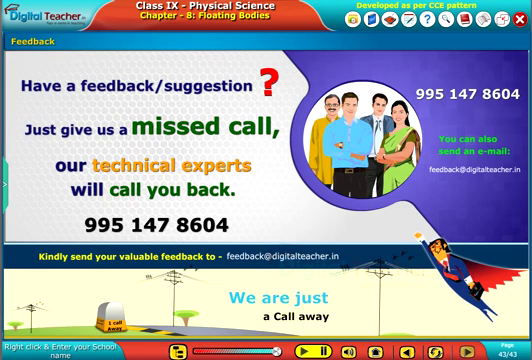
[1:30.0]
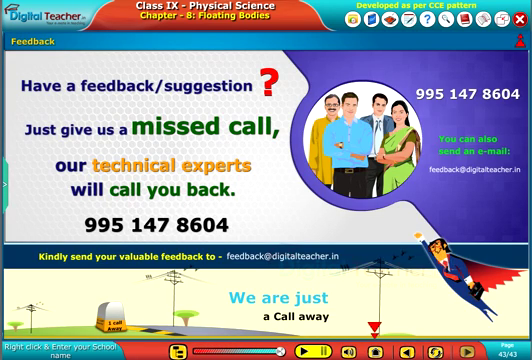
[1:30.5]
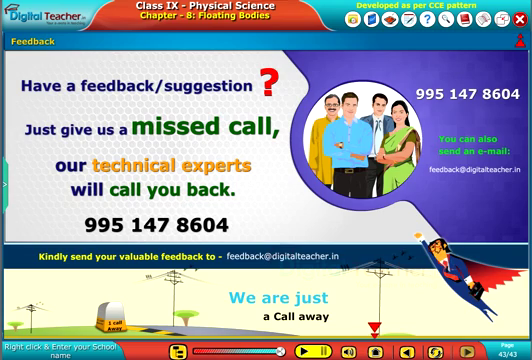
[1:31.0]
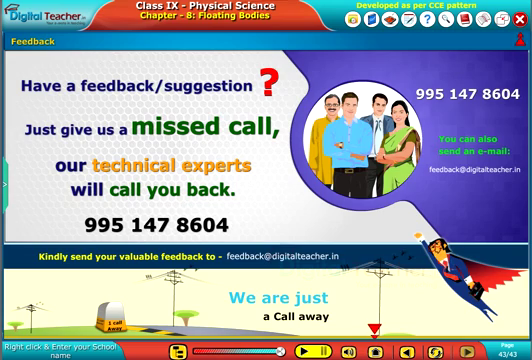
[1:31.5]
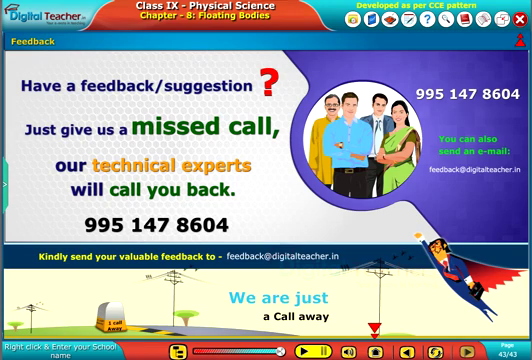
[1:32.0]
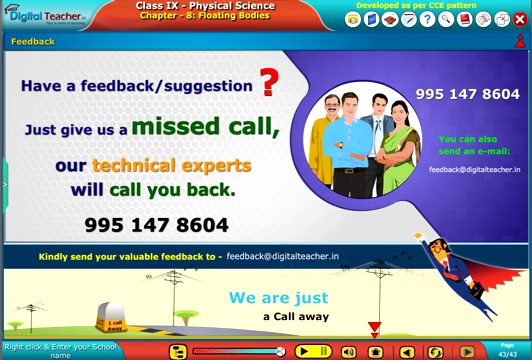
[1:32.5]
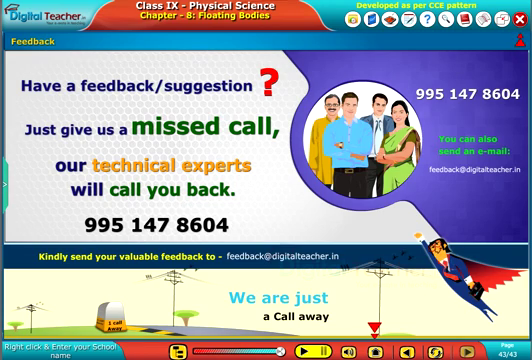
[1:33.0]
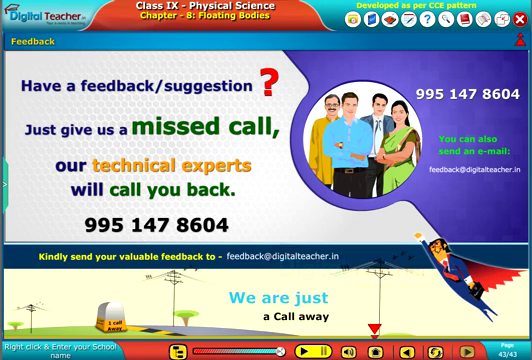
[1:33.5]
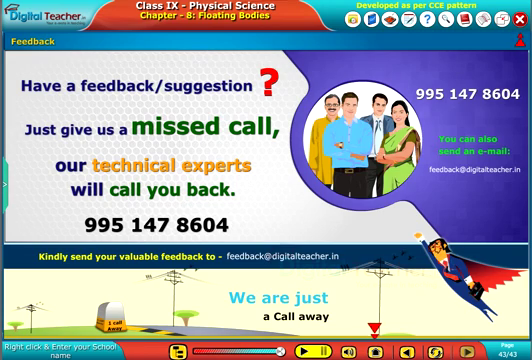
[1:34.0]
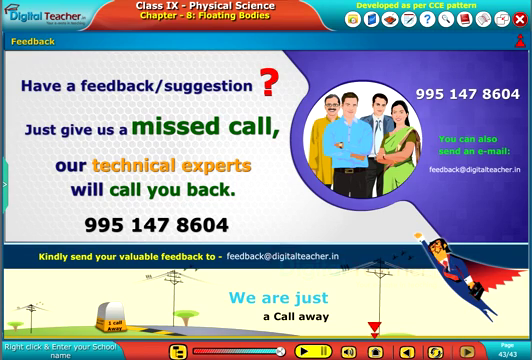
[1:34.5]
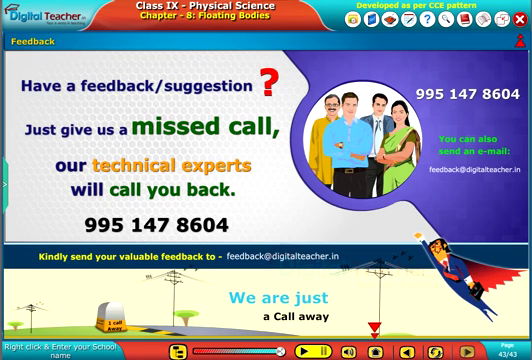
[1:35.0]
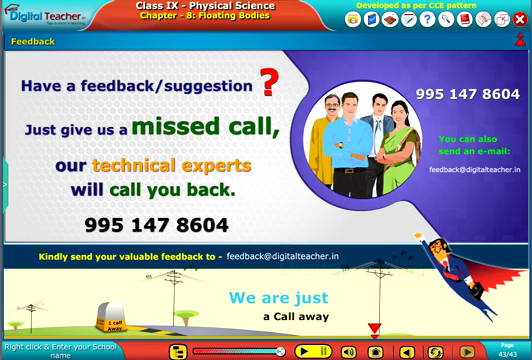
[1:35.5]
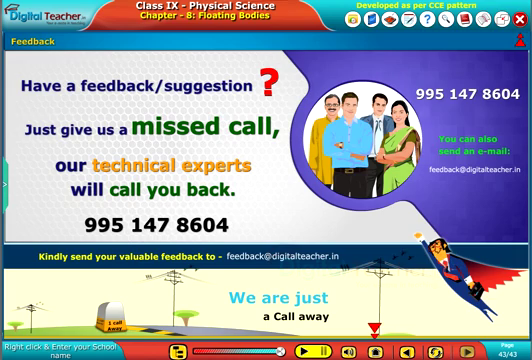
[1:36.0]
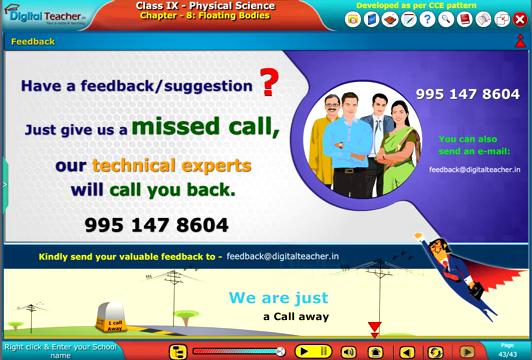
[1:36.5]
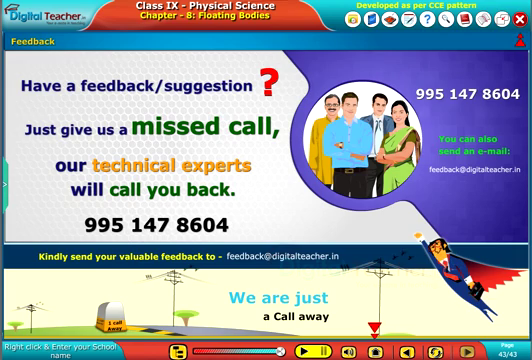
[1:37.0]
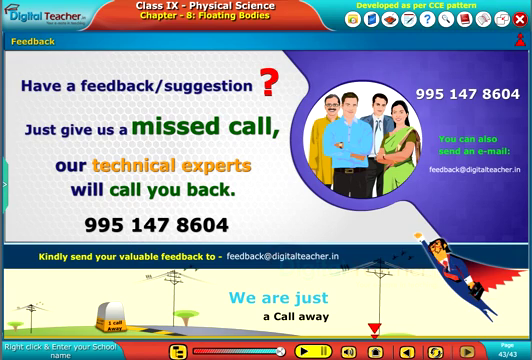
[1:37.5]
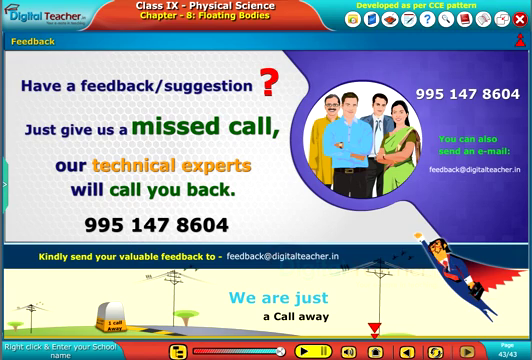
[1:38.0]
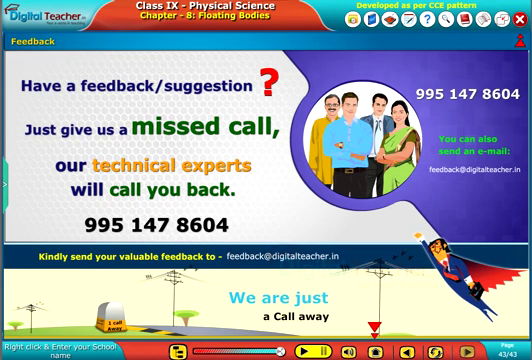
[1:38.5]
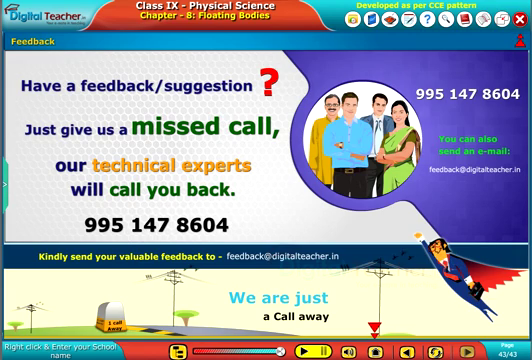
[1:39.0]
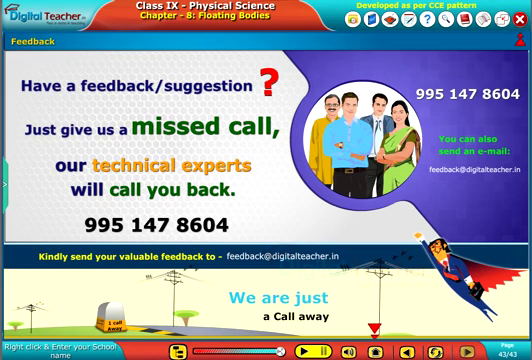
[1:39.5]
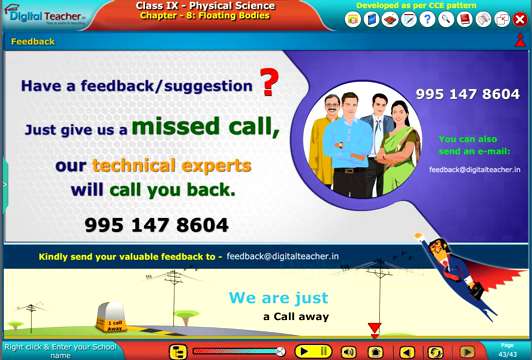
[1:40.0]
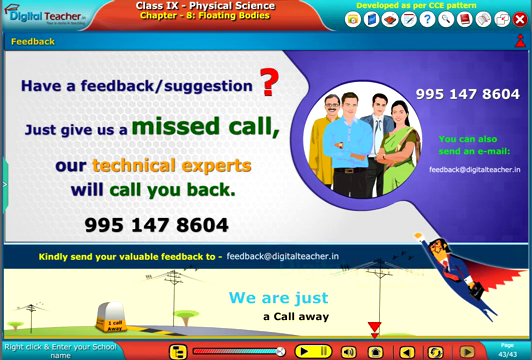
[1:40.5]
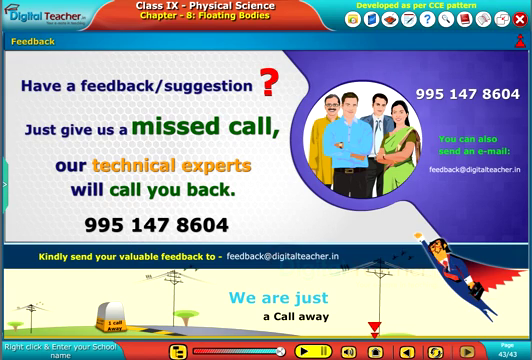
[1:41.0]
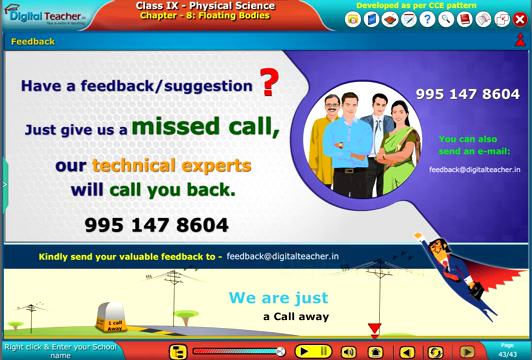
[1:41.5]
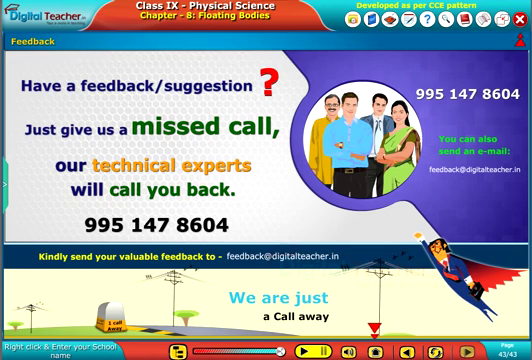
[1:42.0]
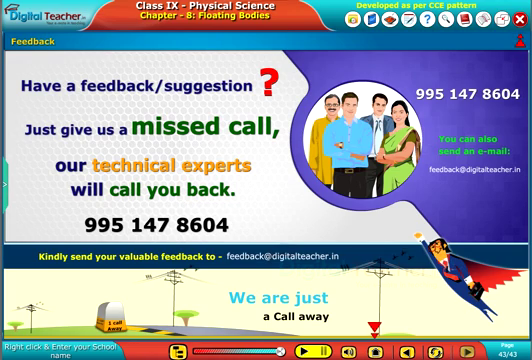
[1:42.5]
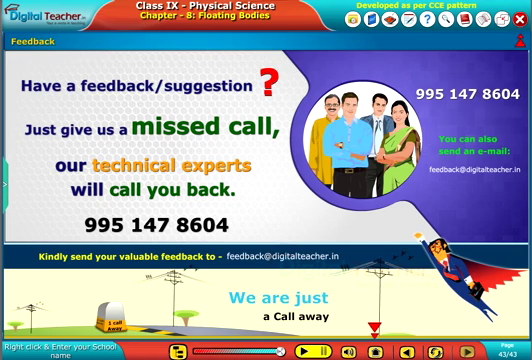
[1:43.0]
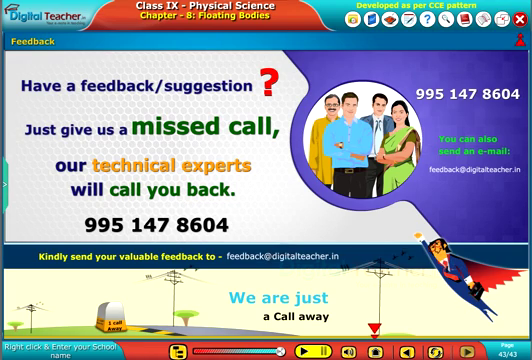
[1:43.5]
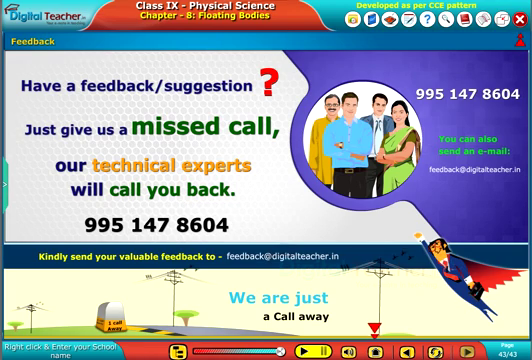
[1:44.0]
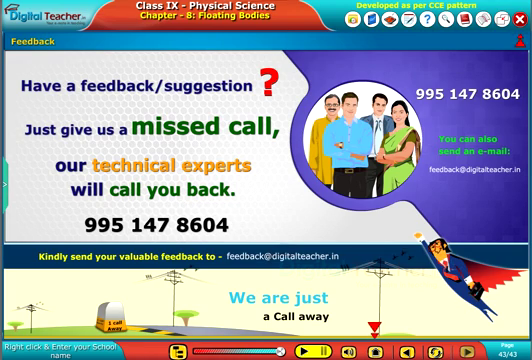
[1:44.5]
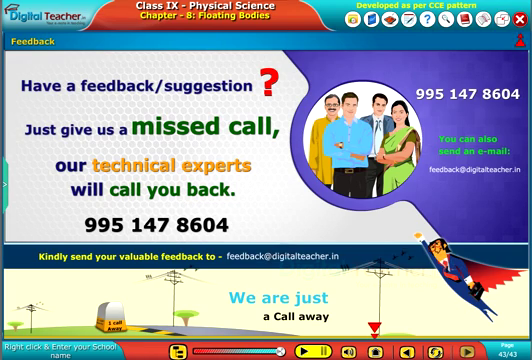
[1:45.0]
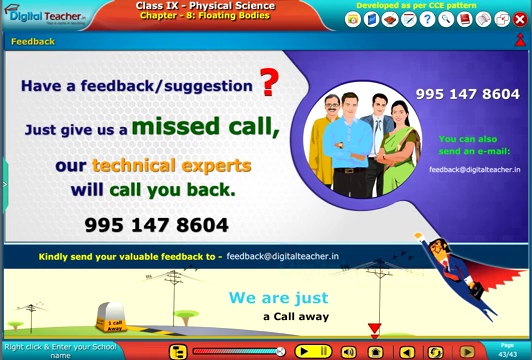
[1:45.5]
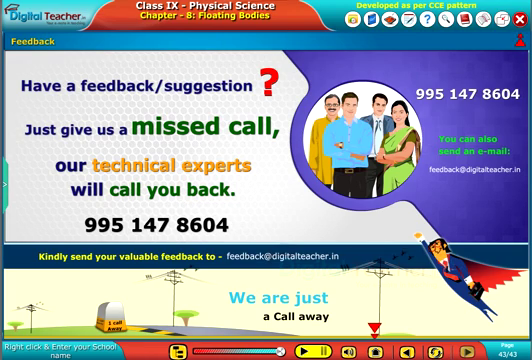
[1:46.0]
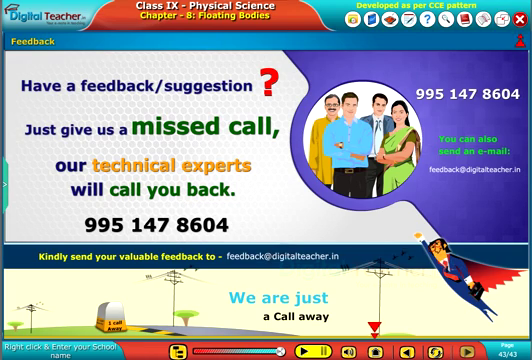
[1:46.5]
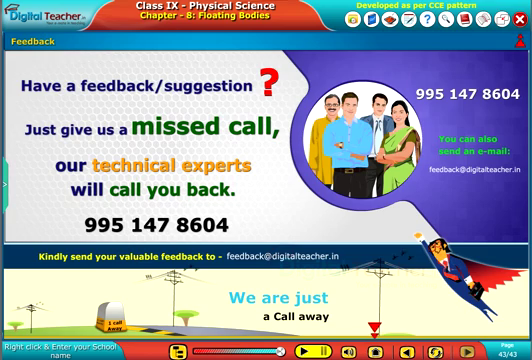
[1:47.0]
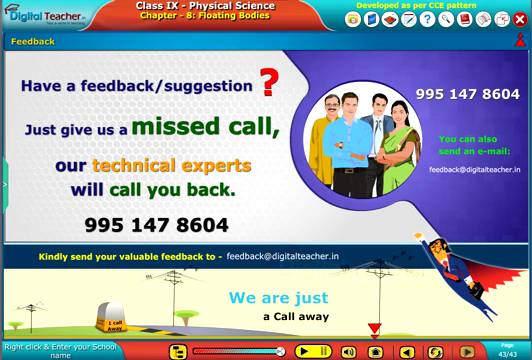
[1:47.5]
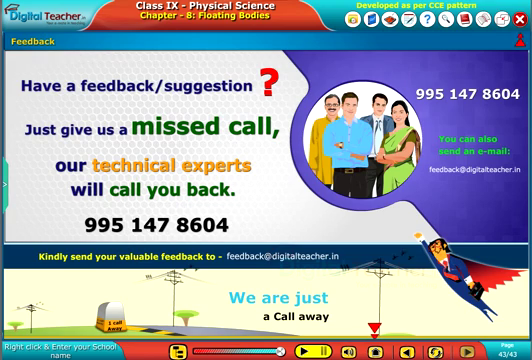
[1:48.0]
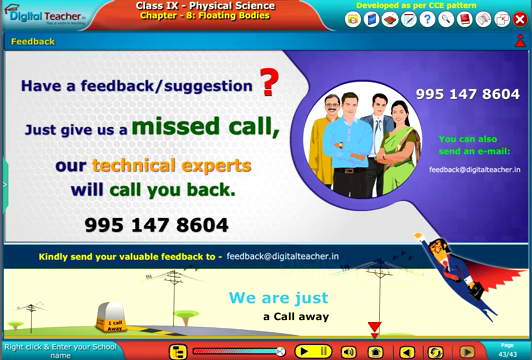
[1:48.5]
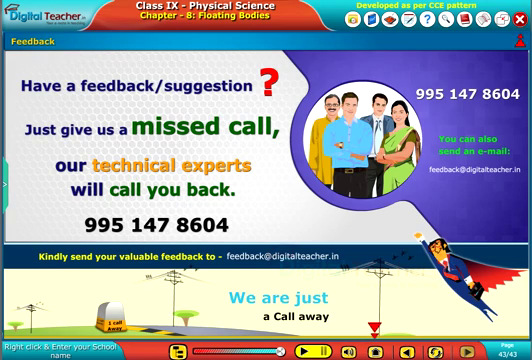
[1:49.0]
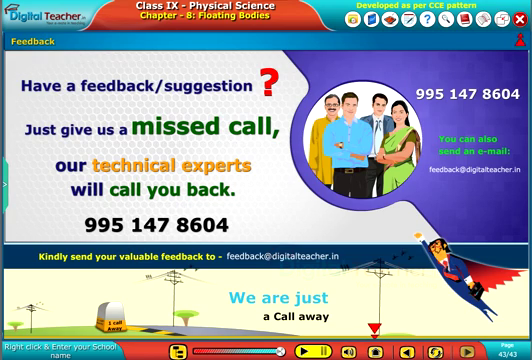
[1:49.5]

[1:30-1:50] A feedback message opens, starting "have a feedback suggestion" and asking for a missed call, with a request to send feedback by email. A group of people, probably teachers, is on the right side, and Superman is flying at the lower right. The screen is labeled class 9, physical science, chapter 8, floating bodies. Several options on the right are shown in circles, each represented by an item, and the technical support number is 995-147-8604. More options are at the bottom, and an option on the left opens the whole set of sub-chapters.